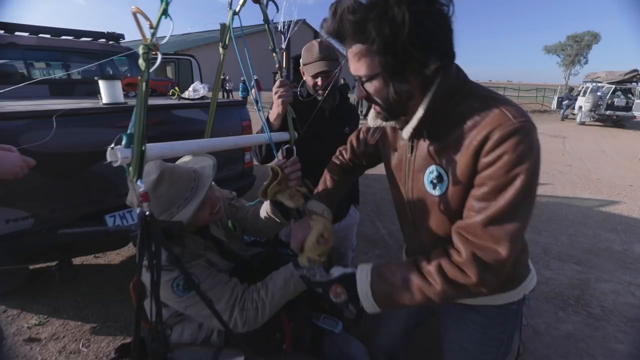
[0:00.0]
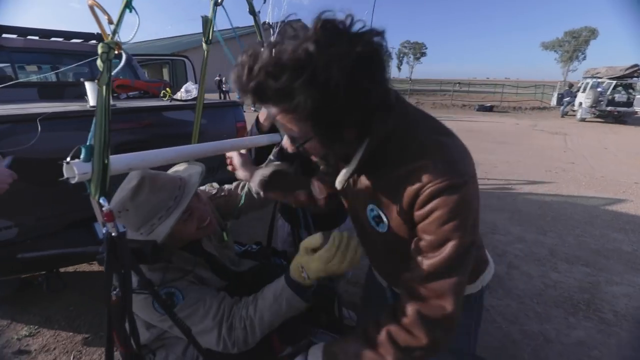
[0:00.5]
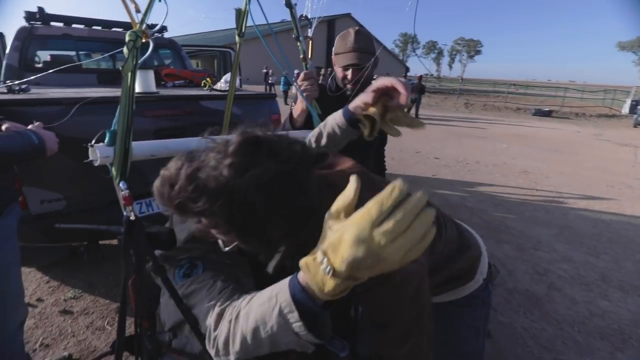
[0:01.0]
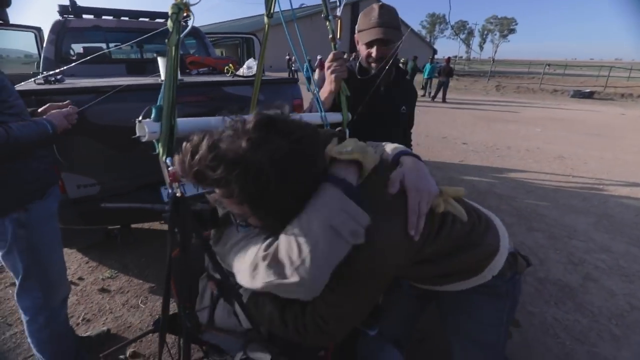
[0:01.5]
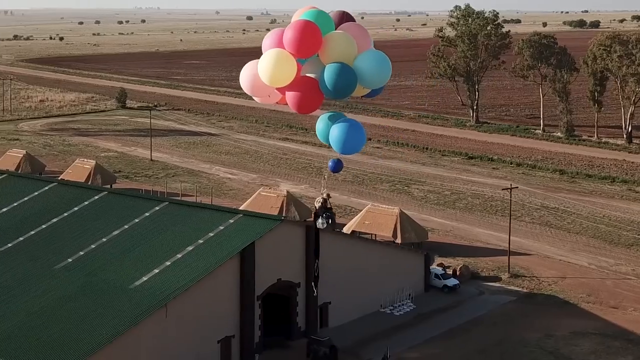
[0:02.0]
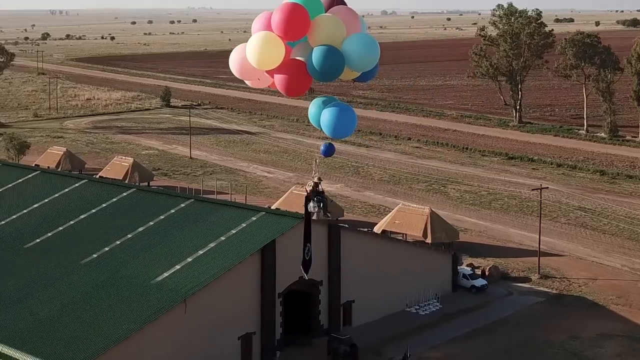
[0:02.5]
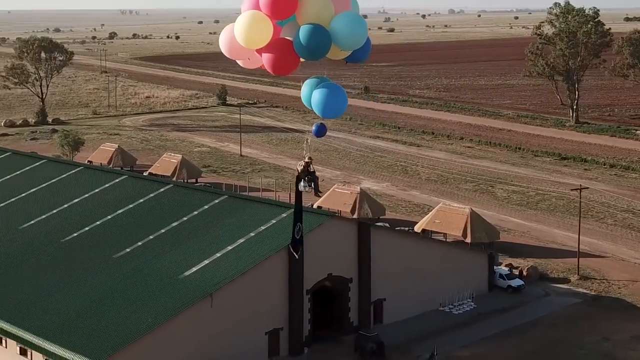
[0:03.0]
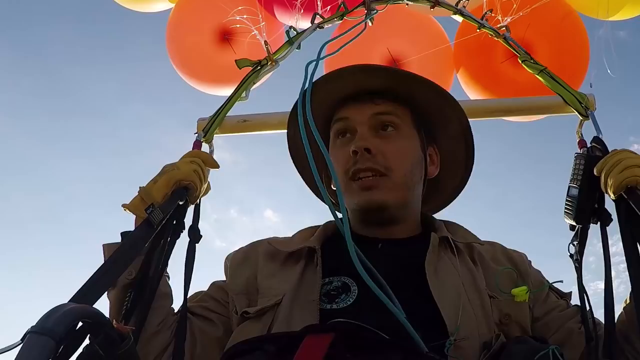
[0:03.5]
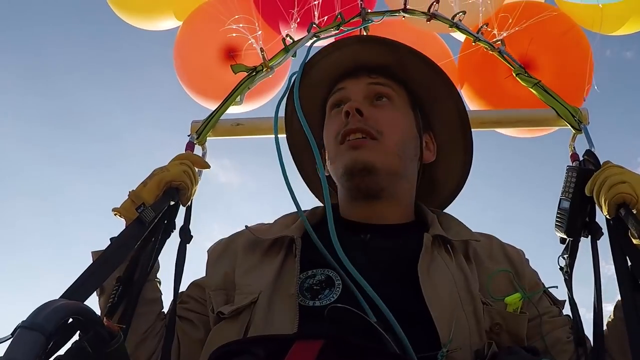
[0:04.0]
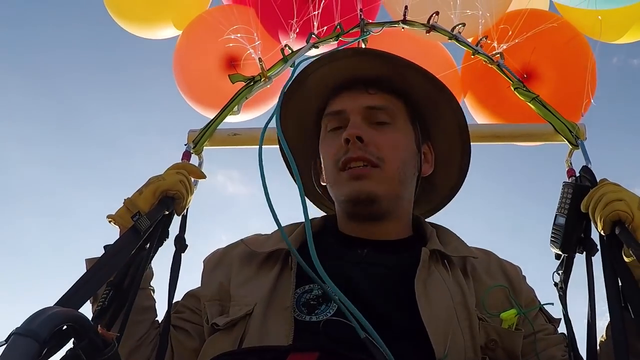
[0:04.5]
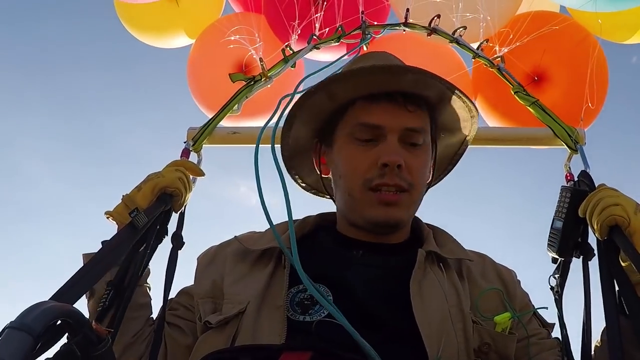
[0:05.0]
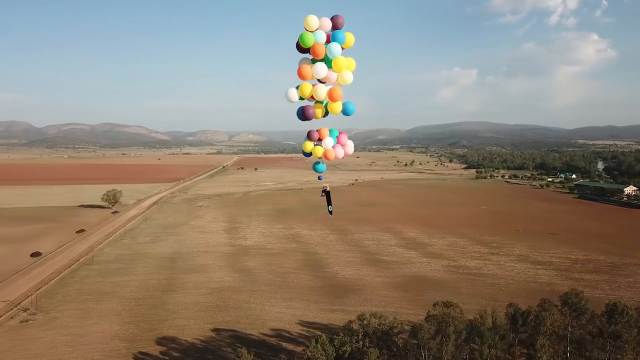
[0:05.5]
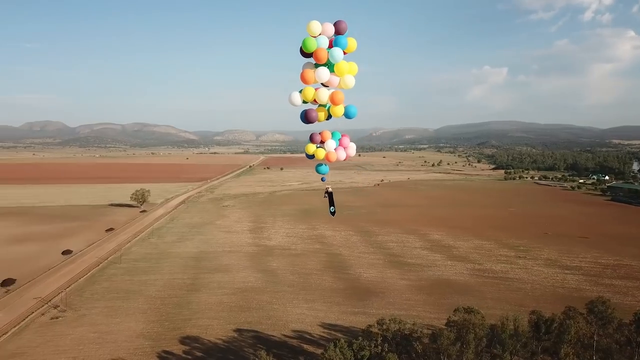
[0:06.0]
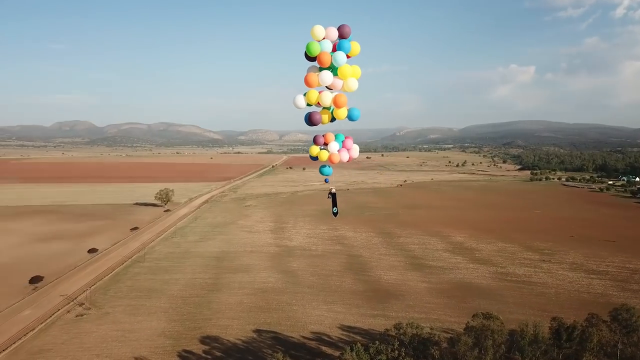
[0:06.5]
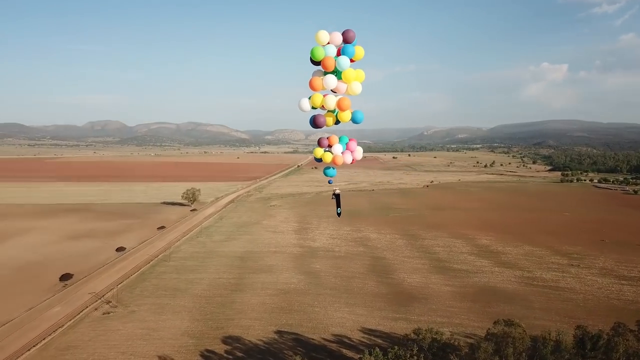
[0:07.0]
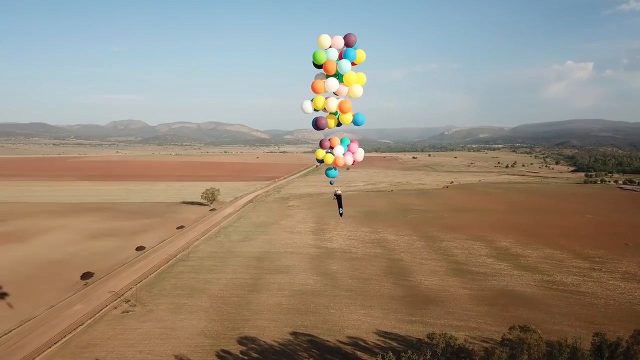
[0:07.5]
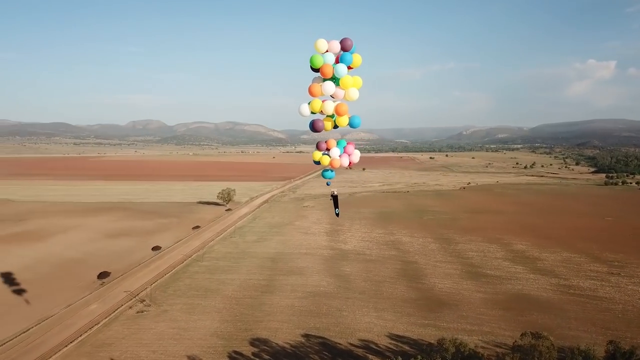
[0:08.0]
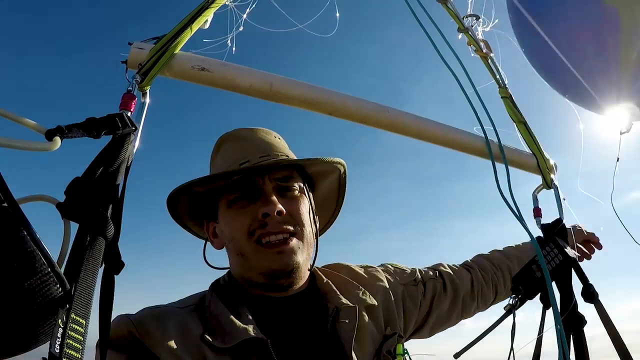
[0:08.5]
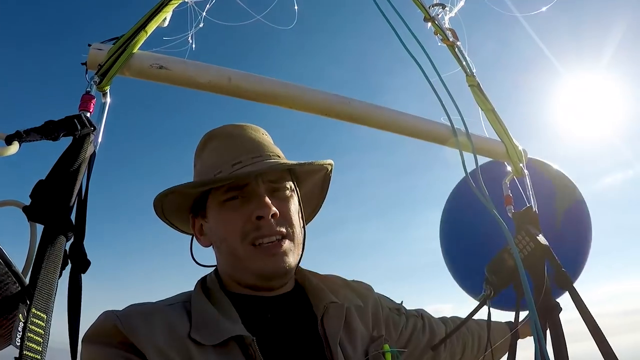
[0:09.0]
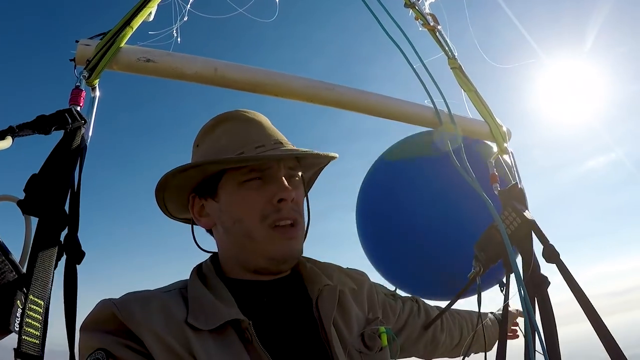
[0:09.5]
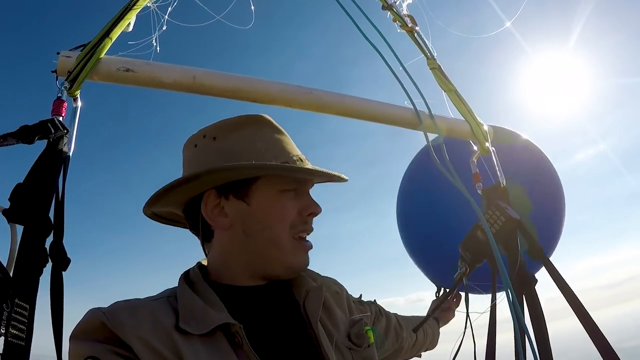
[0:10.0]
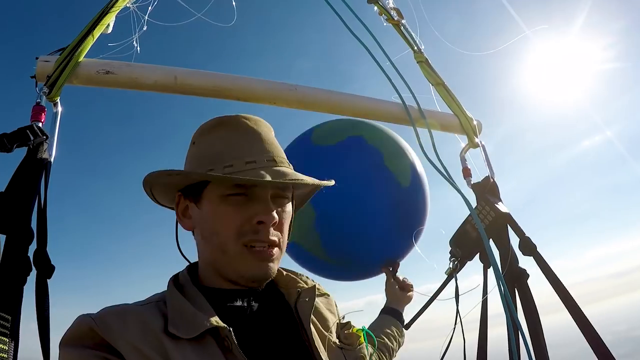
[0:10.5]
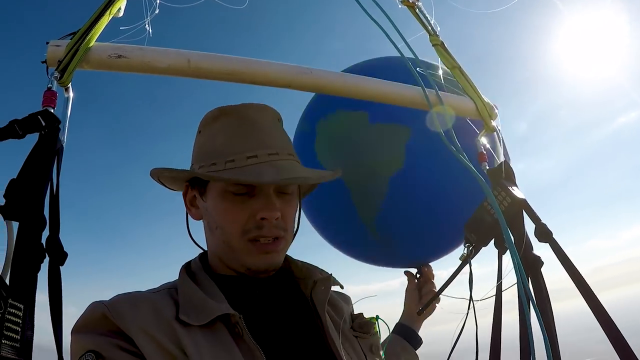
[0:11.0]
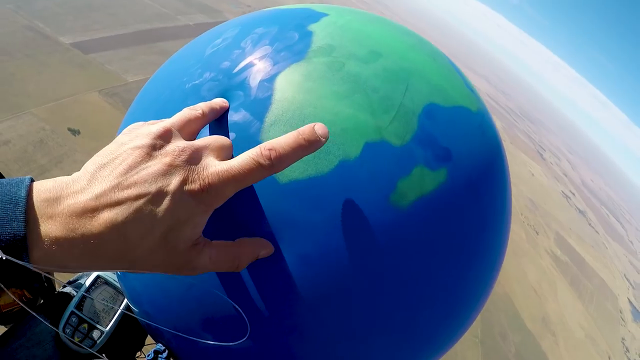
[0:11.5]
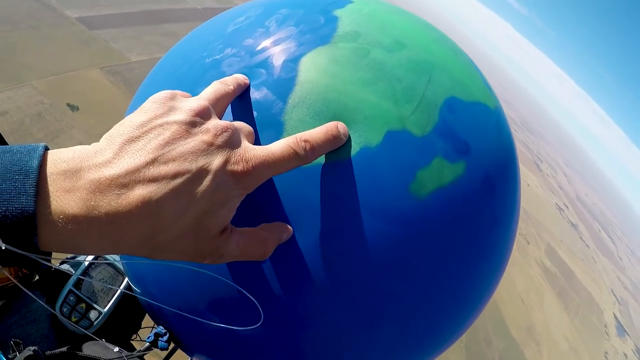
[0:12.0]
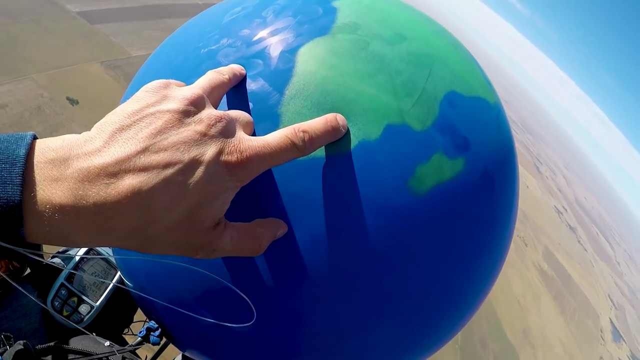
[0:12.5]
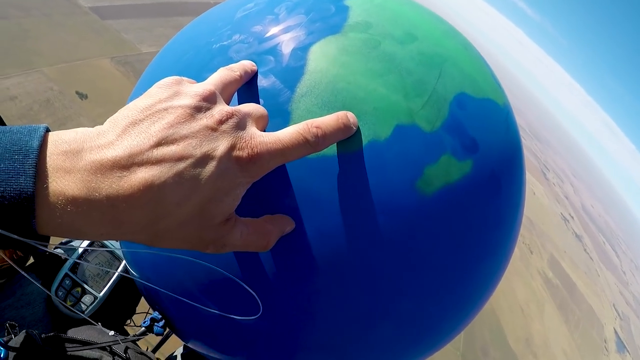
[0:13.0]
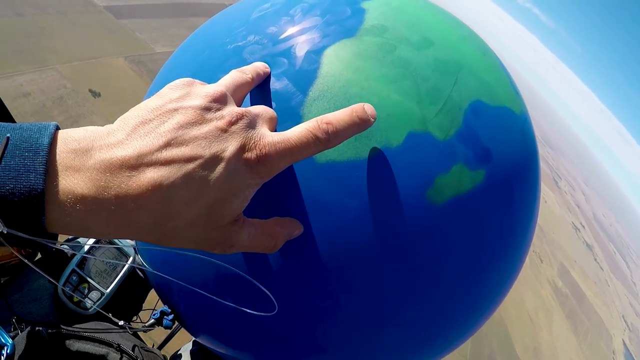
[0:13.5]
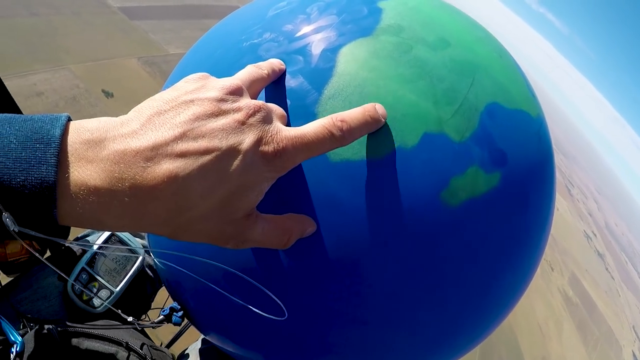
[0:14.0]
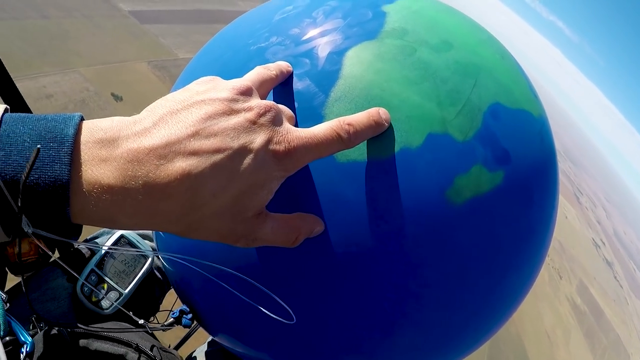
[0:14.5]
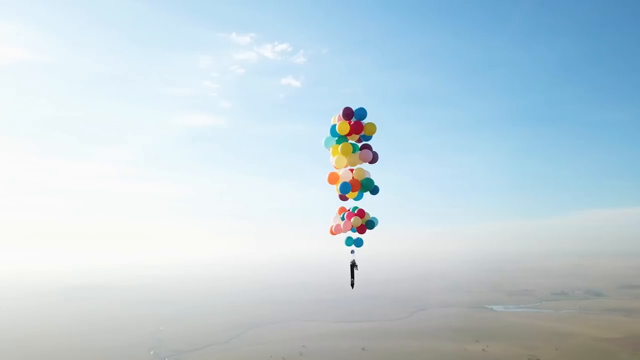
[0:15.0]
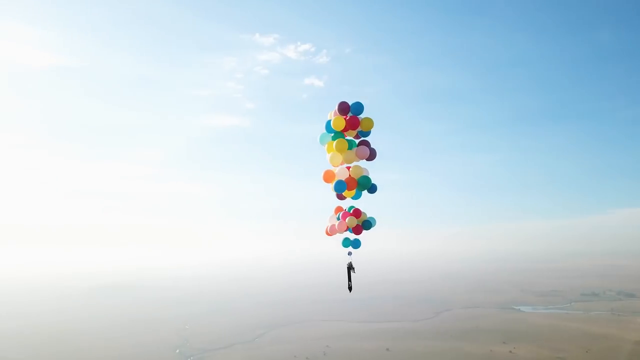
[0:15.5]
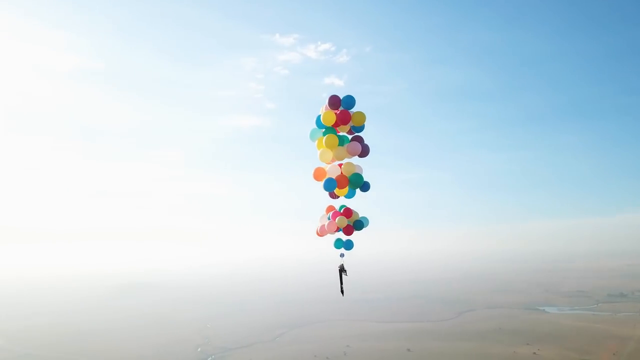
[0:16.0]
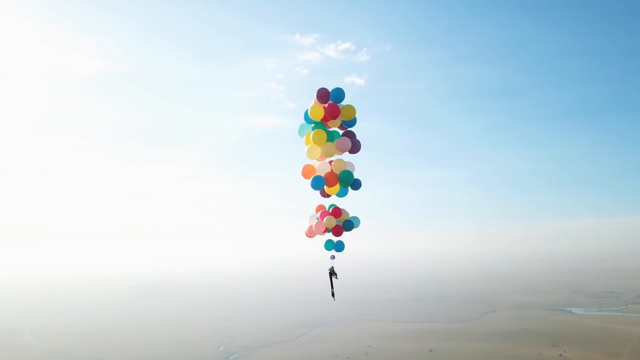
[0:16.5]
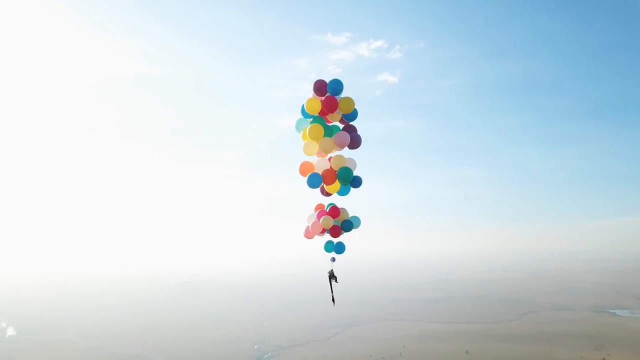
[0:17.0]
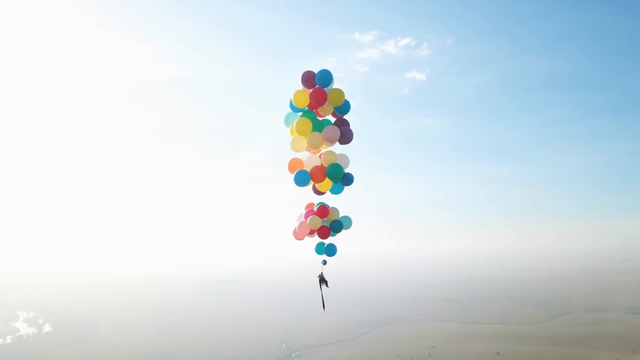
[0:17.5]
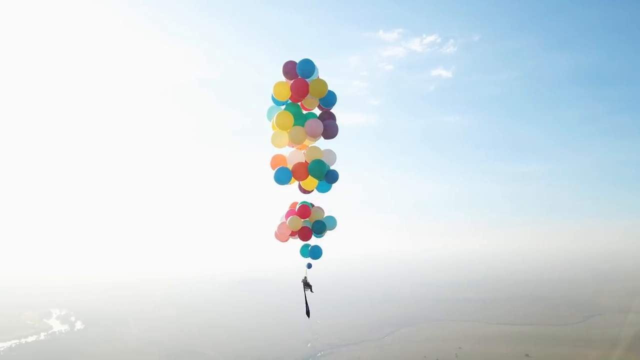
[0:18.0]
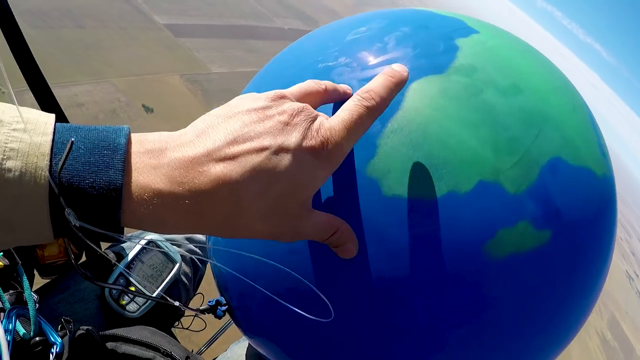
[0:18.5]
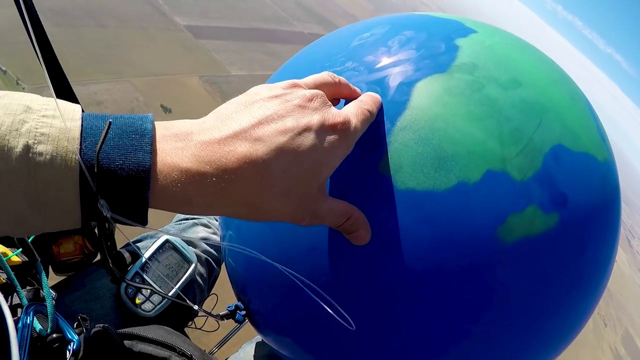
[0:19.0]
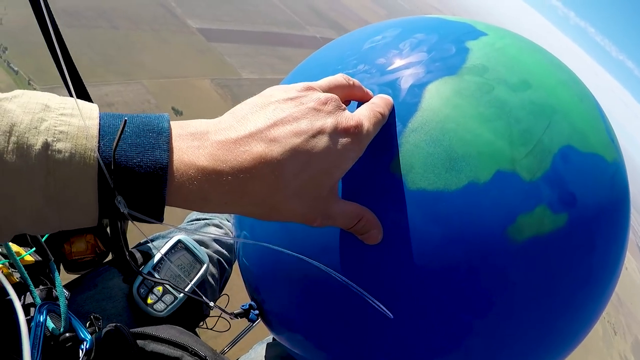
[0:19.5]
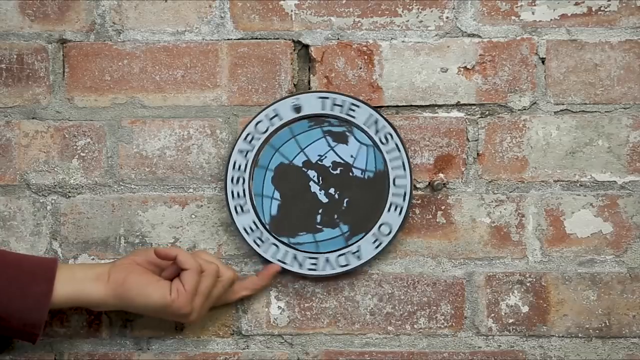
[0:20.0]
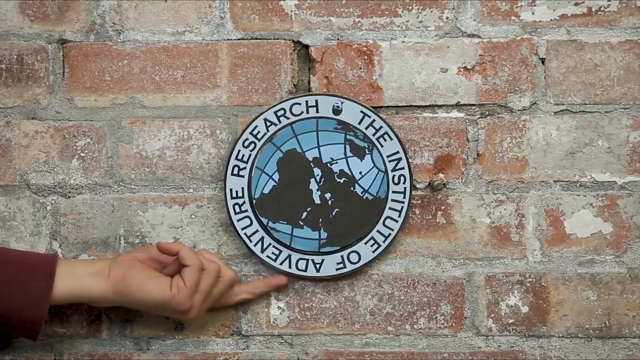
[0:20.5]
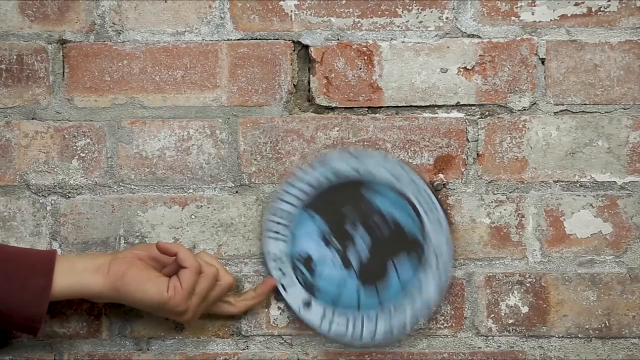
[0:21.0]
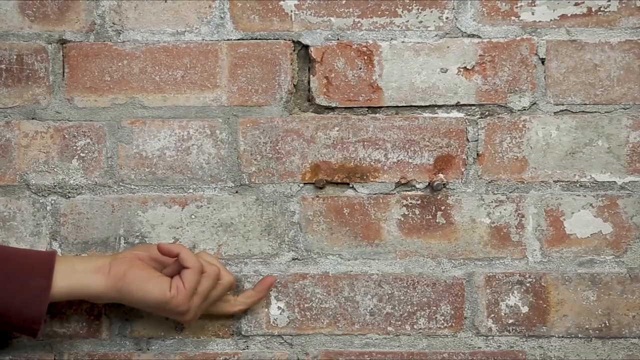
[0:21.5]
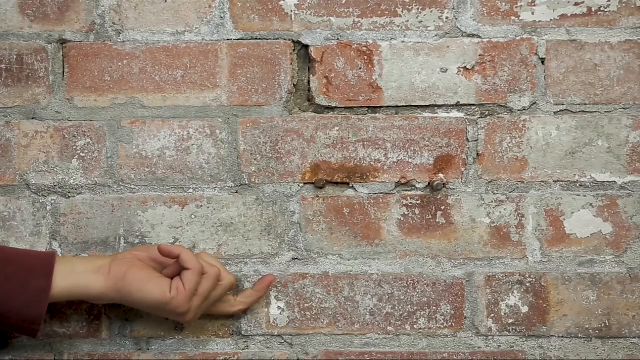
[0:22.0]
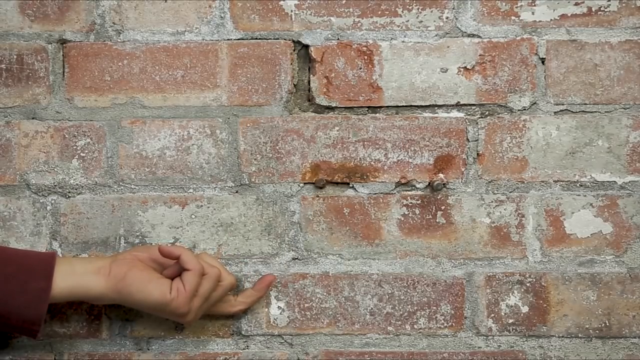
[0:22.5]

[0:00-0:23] The title reads "we have liftoff first test flight for the" and is then cut off. The thumbnail shows a picture of the sky with many balloons. The video shows a man in a chair attached to all kinds of balloons in various colors; they appear to be giant balloons, like giant weather balloons. Early in the video, the man hugs someone, possibly before he lifts off or possibly after. He cruises around in the chair, wearing what seems to be a harness, flying with the giant colorful balloons supporting him.